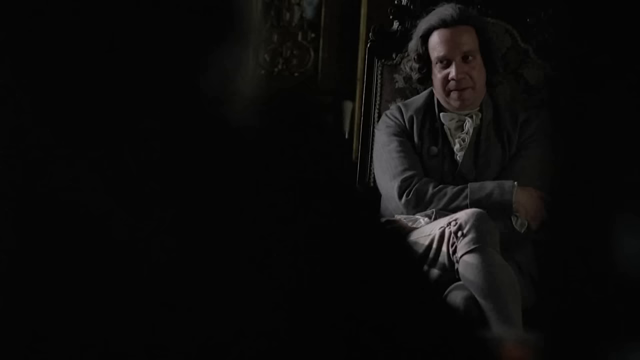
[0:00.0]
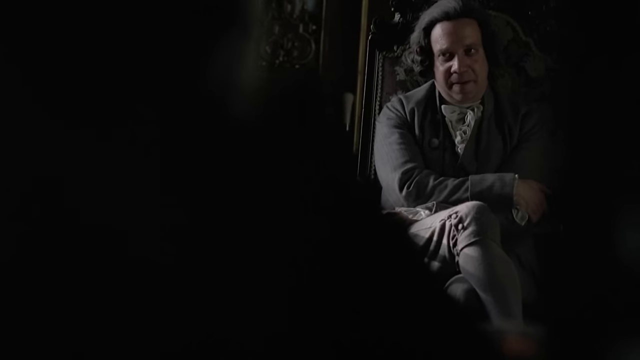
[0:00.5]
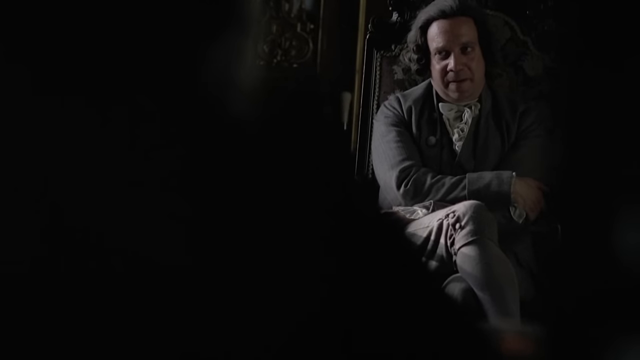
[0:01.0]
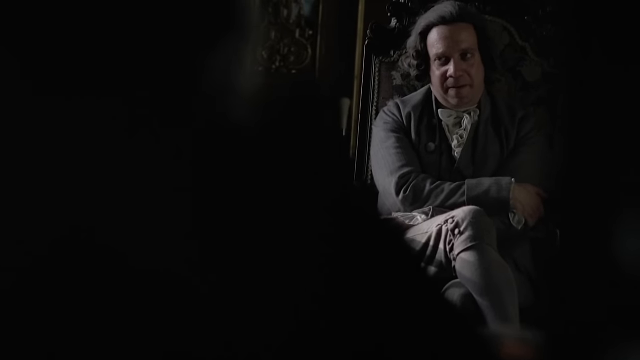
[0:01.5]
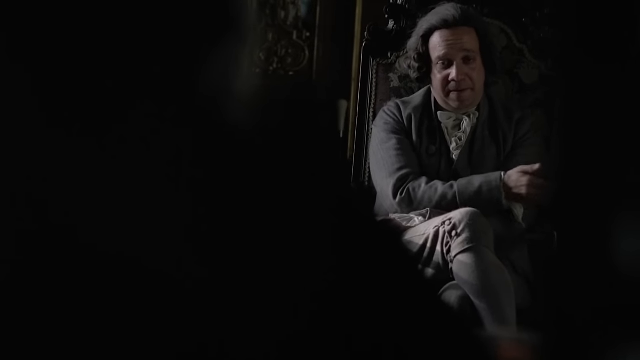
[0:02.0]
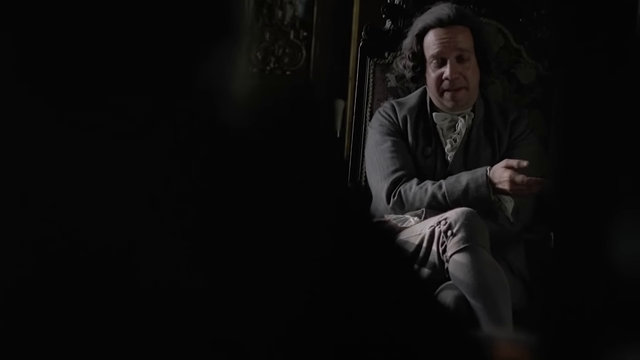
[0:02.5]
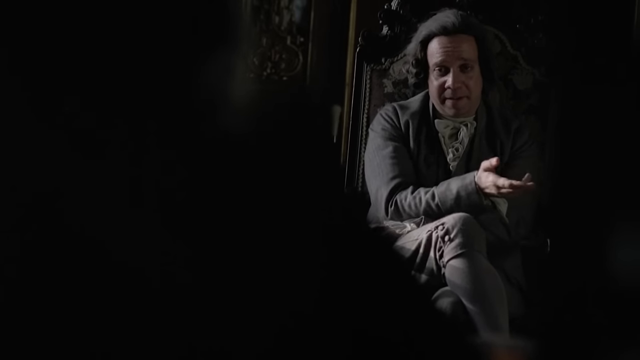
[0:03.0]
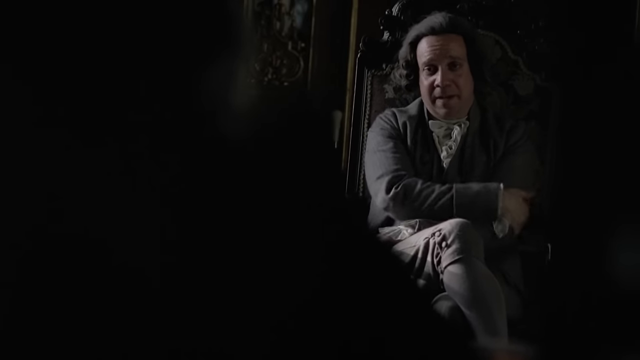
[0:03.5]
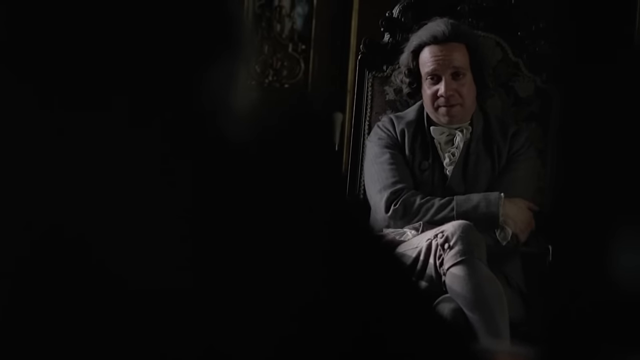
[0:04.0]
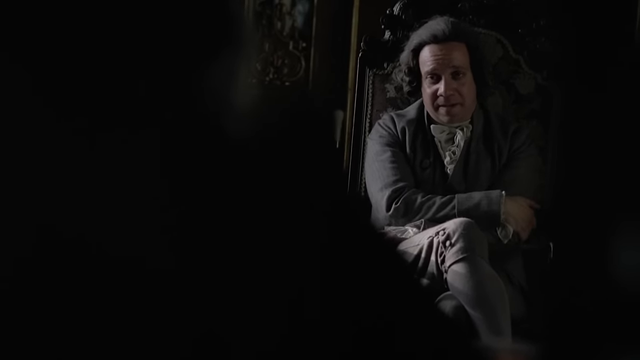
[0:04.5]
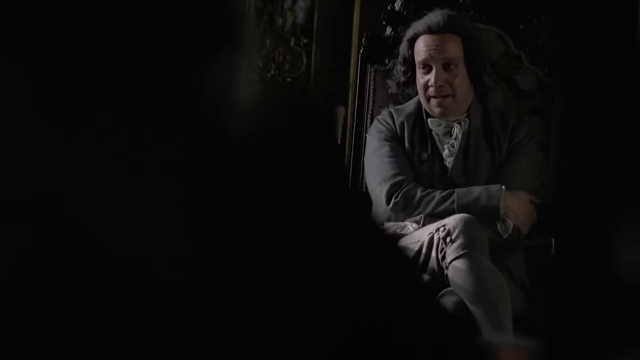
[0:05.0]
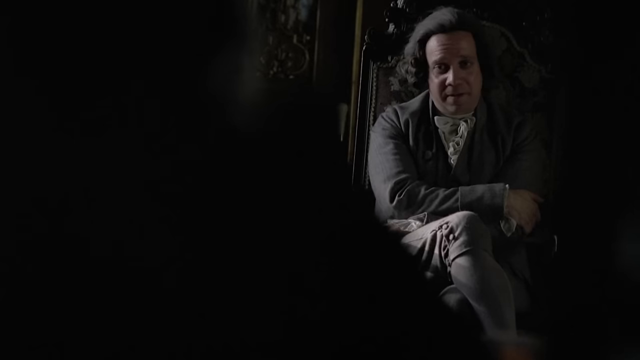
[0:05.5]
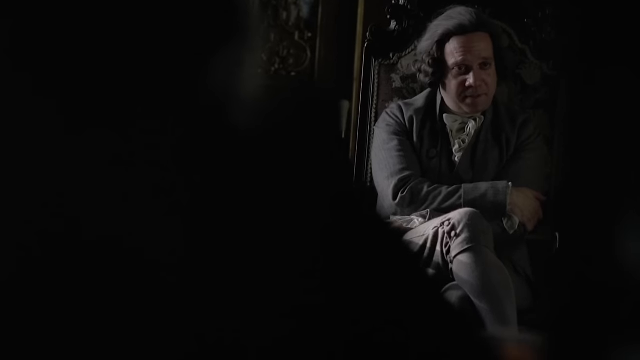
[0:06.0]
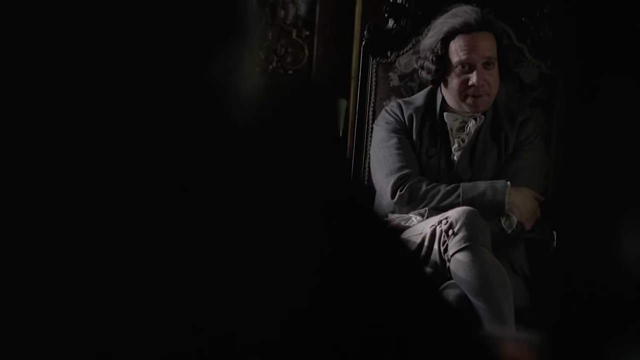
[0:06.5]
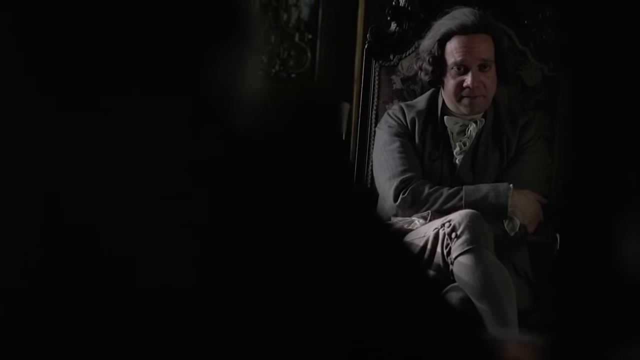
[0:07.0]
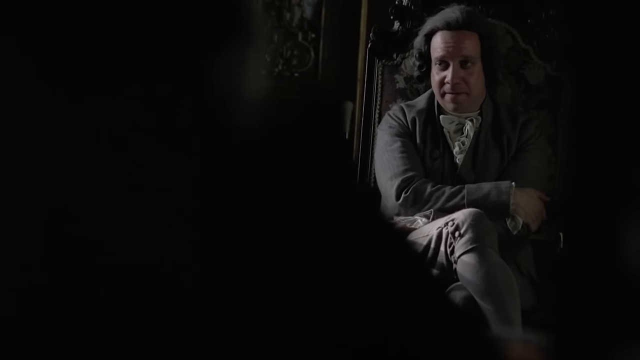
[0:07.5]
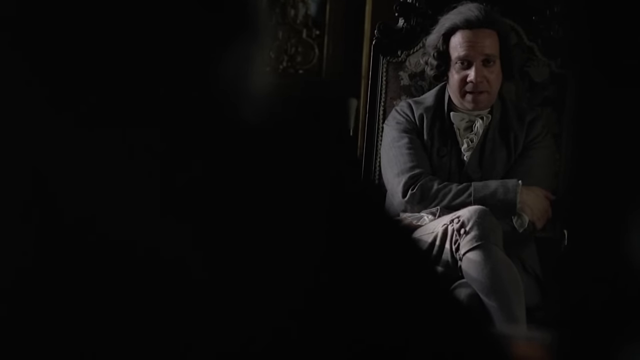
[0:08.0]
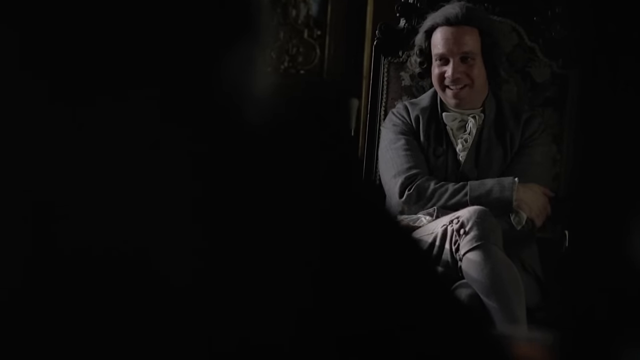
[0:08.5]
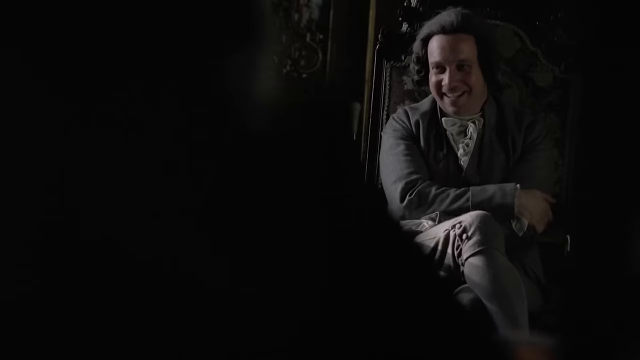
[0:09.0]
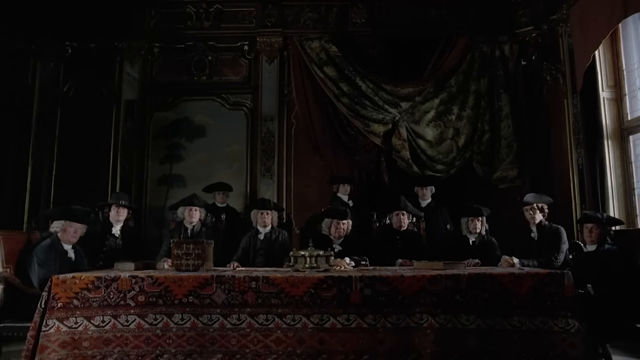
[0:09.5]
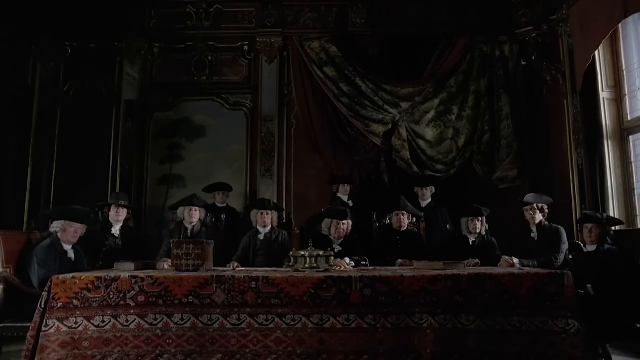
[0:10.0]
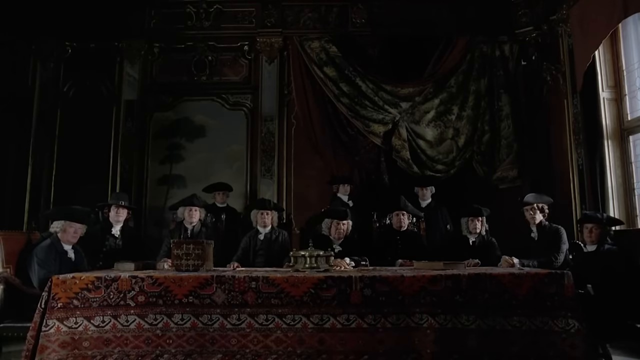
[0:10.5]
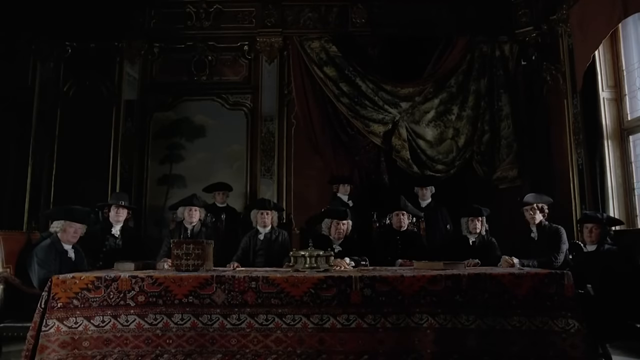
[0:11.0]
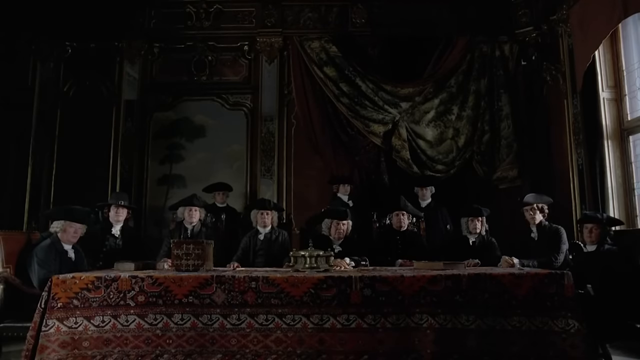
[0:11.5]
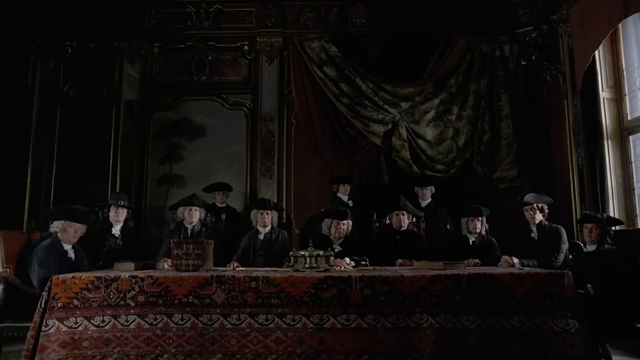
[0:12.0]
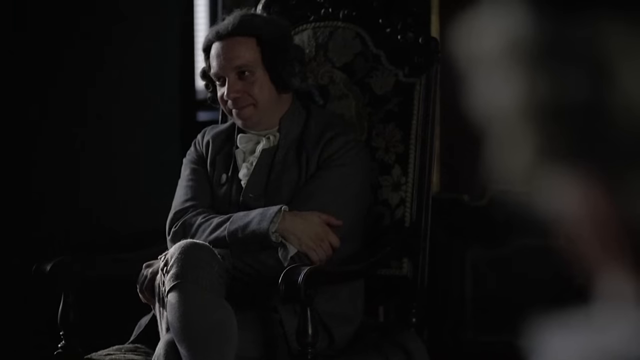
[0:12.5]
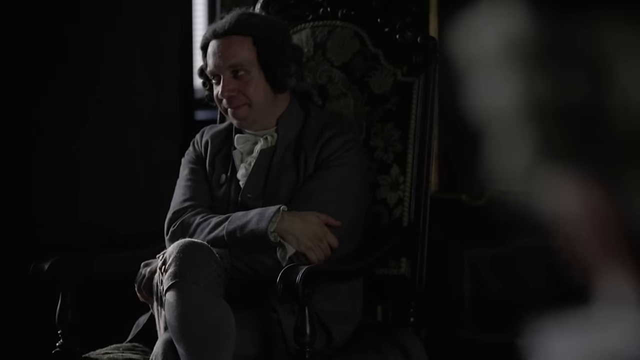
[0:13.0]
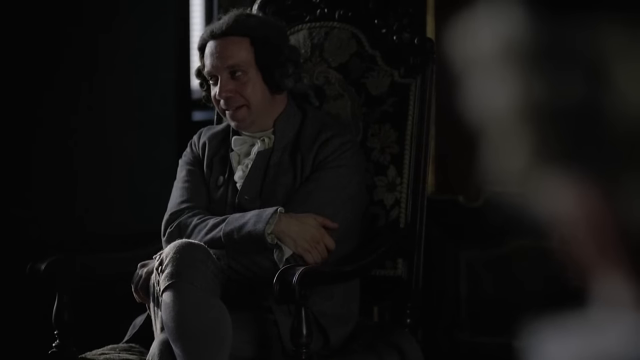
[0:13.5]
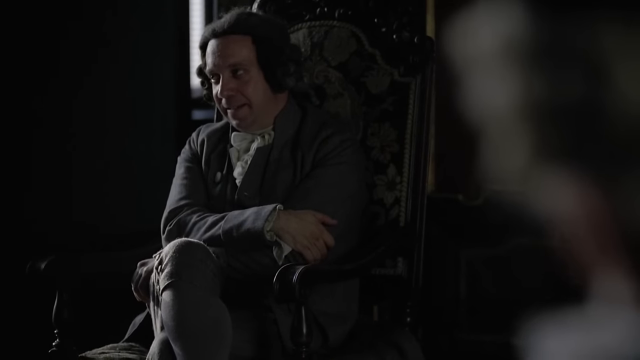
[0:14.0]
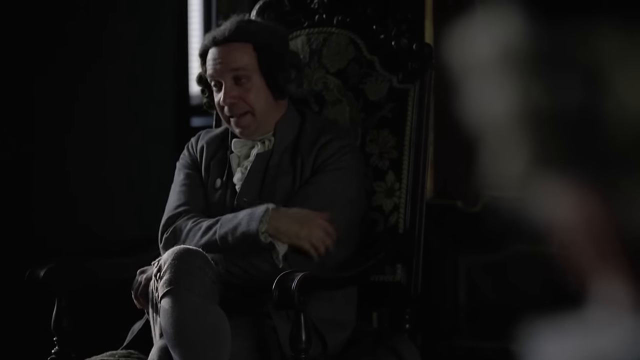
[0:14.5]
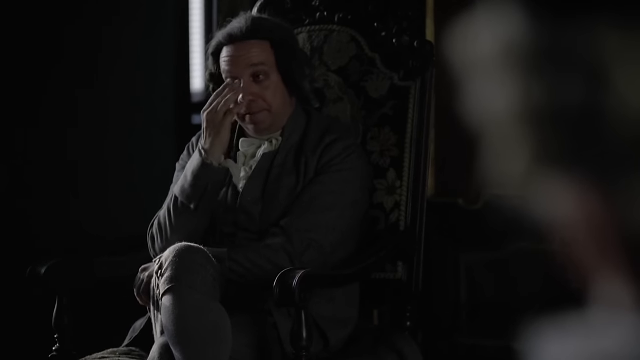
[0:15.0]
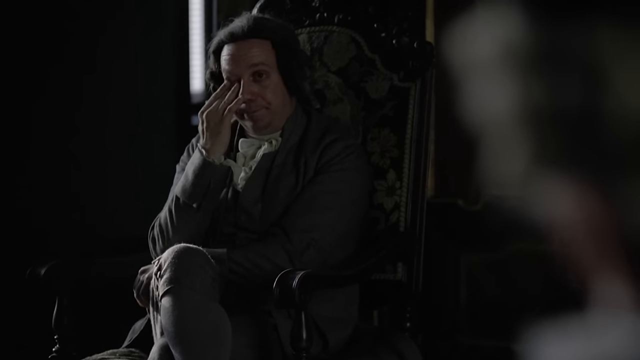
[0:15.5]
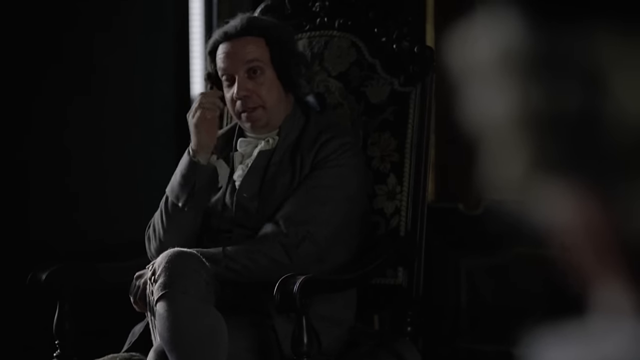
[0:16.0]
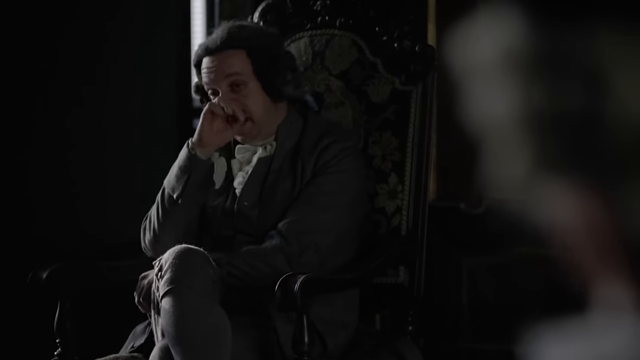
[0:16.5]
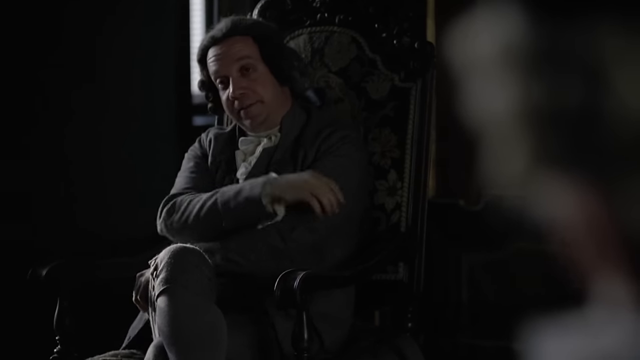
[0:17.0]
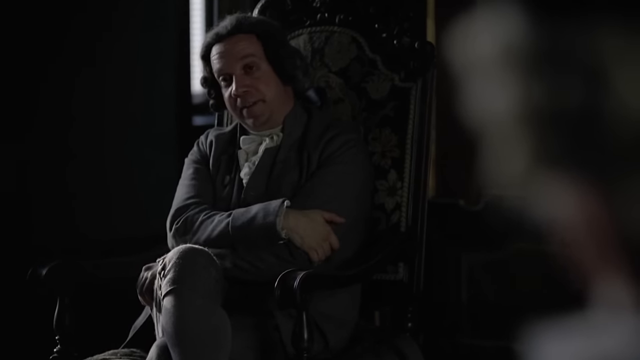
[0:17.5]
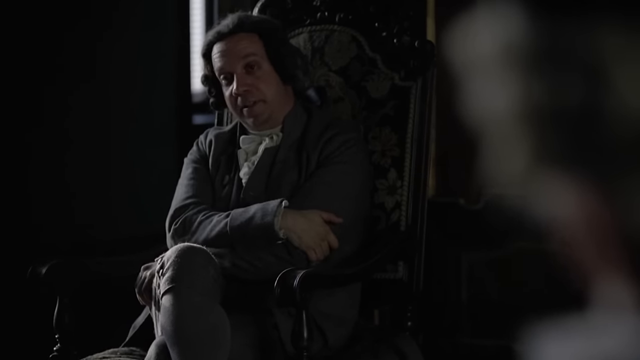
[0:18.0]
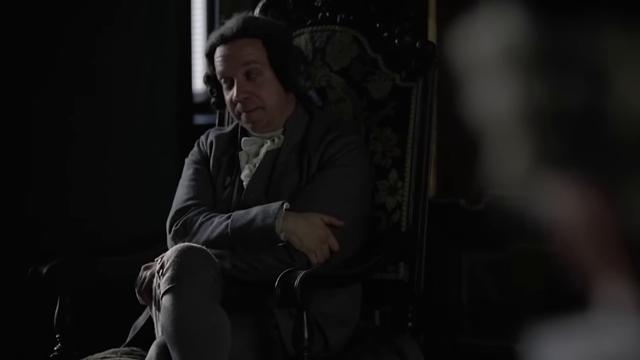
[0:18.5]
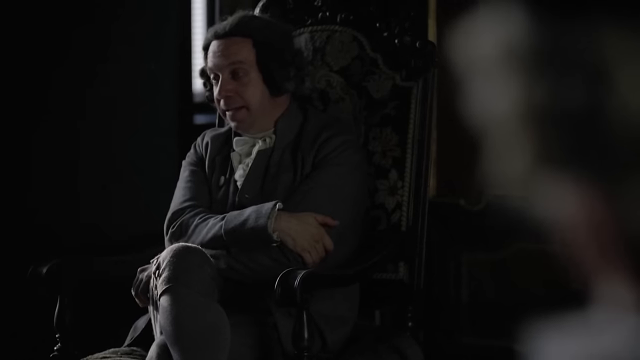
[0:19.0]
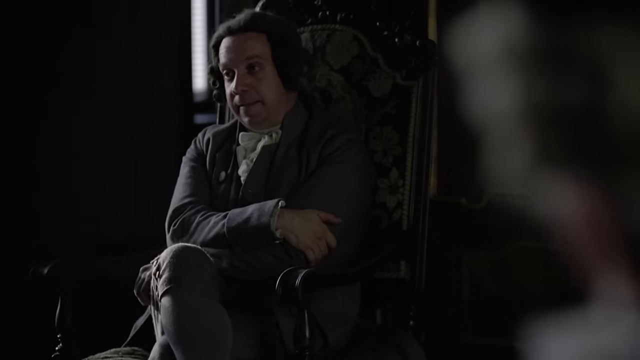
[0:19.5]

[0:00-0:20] An old man with very long hair talks as he sits in a dark room, addressing someone. The people he is talking to then appear: eleven of them, some women and some men, wearing black and with black hair, sitting at a high table and looking directly at him. He keeps talking to them, scratching his nose and eyes as he speaks, and at one point he laughs. The listeners, all dressed in black, show no movement; they just stare at him while he continues talking.